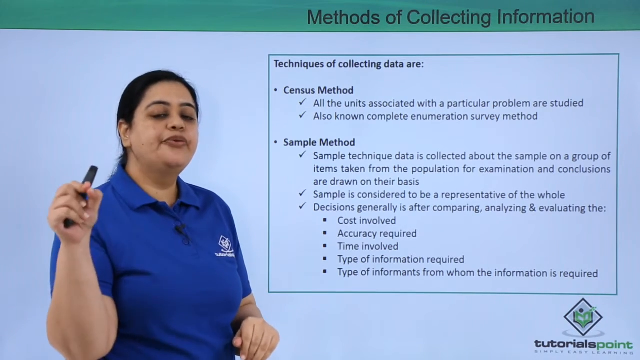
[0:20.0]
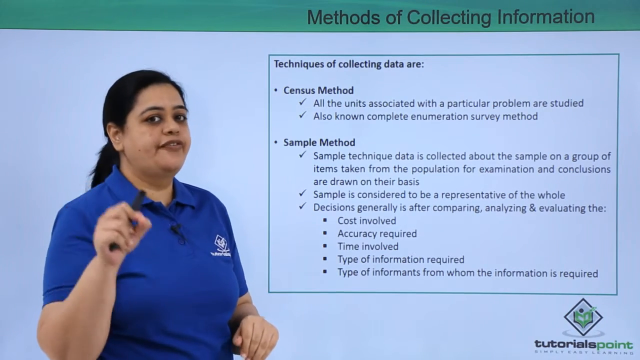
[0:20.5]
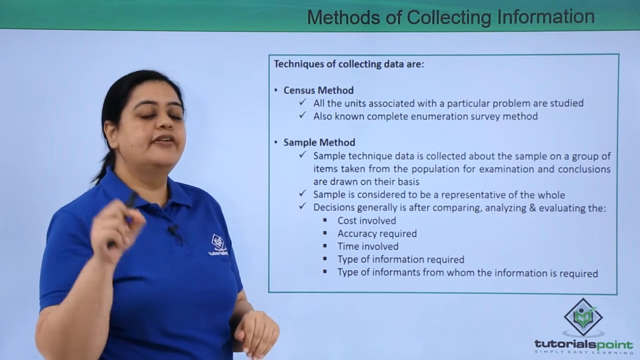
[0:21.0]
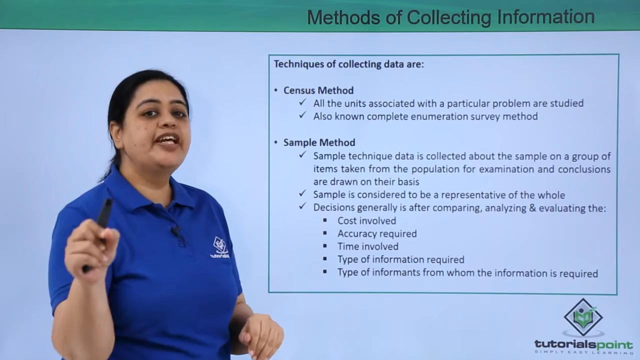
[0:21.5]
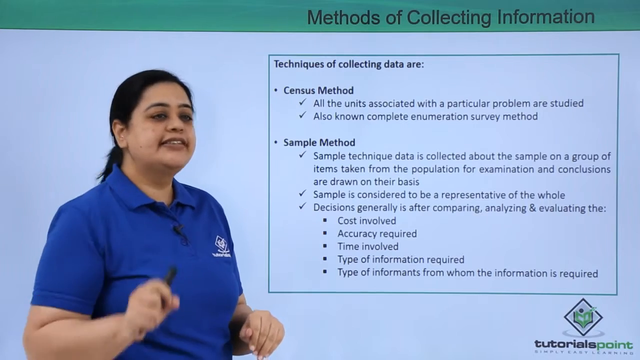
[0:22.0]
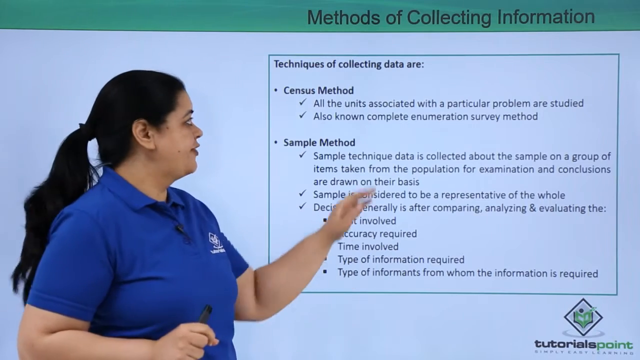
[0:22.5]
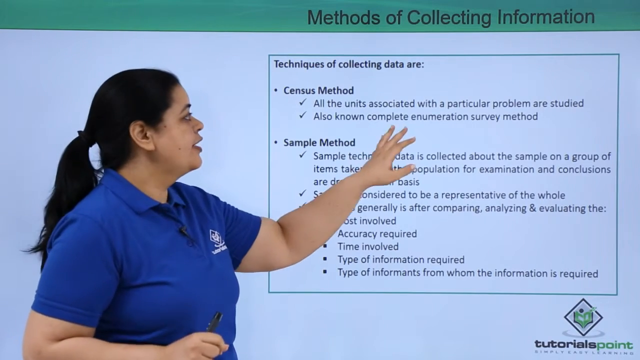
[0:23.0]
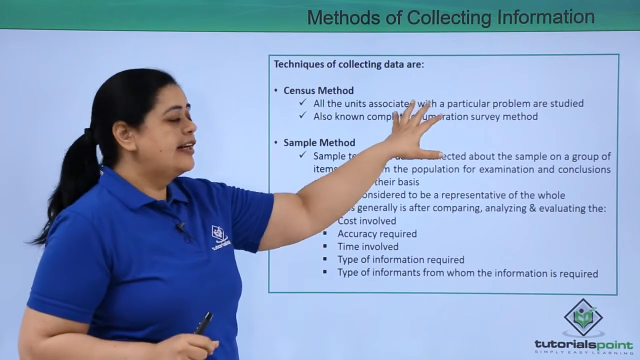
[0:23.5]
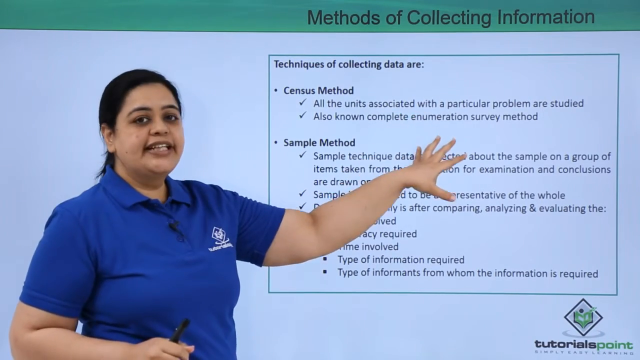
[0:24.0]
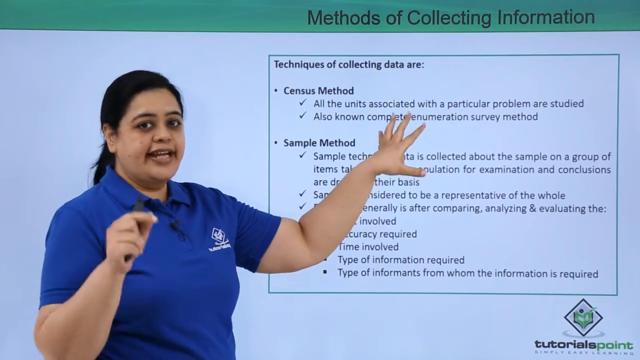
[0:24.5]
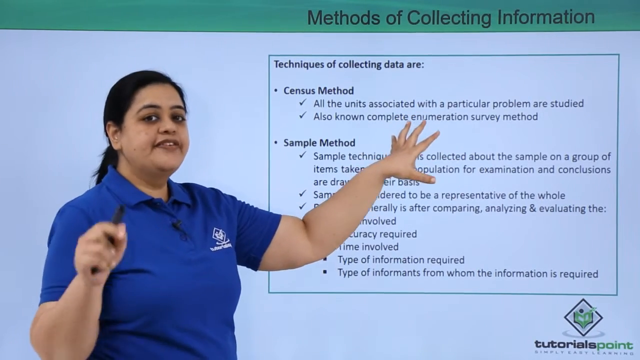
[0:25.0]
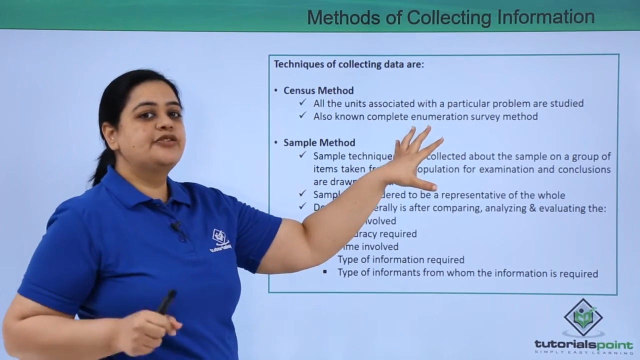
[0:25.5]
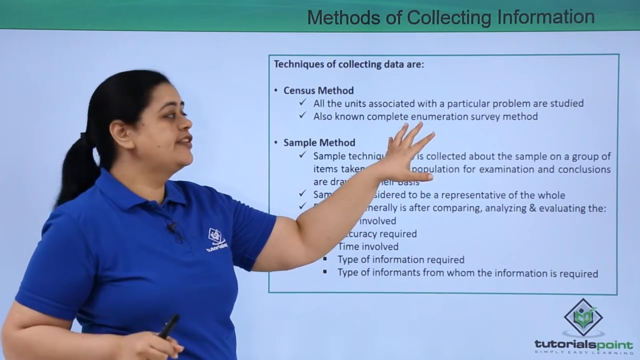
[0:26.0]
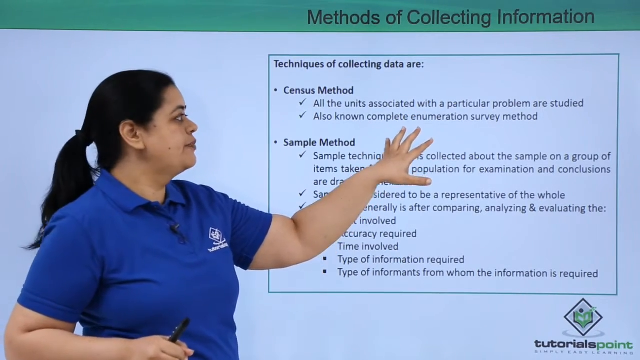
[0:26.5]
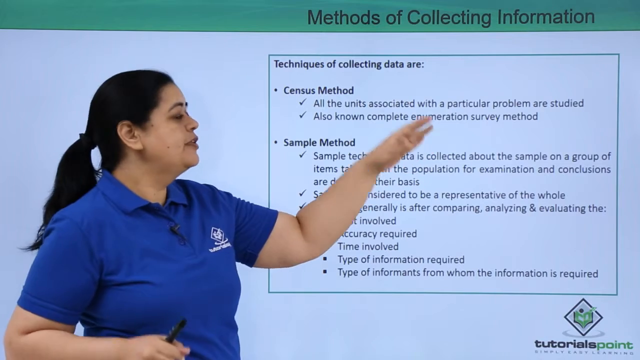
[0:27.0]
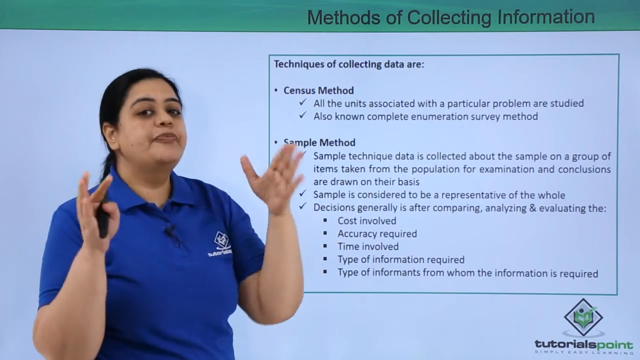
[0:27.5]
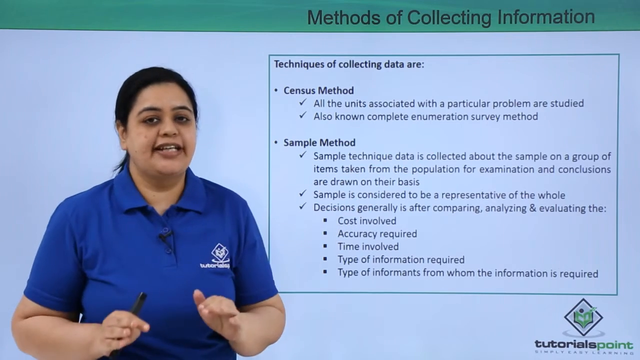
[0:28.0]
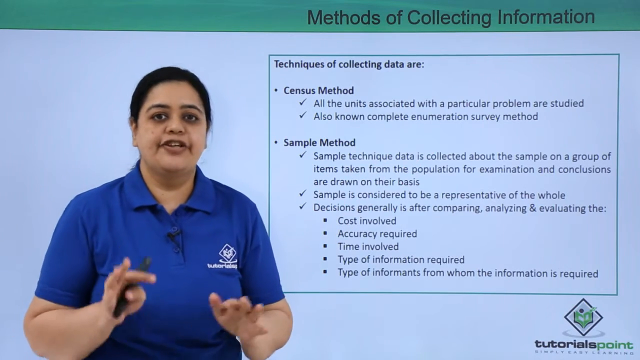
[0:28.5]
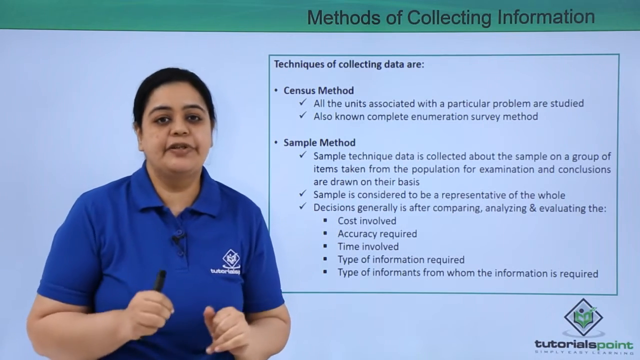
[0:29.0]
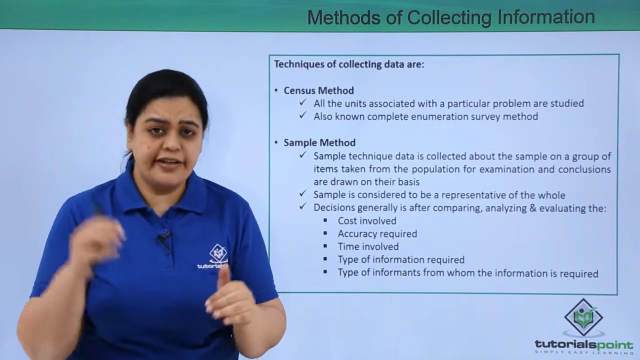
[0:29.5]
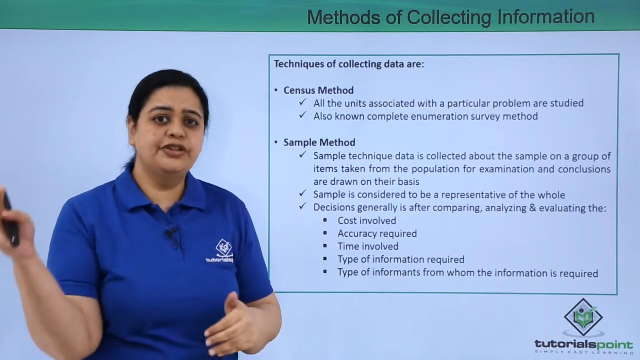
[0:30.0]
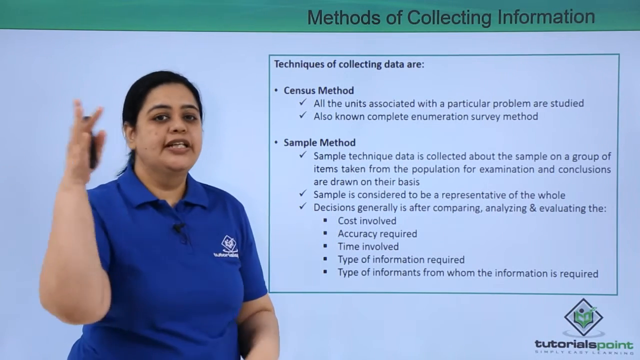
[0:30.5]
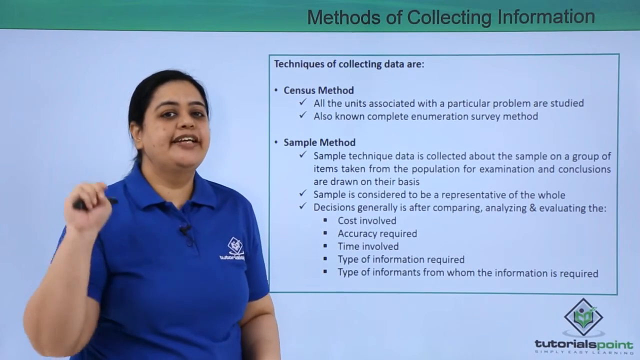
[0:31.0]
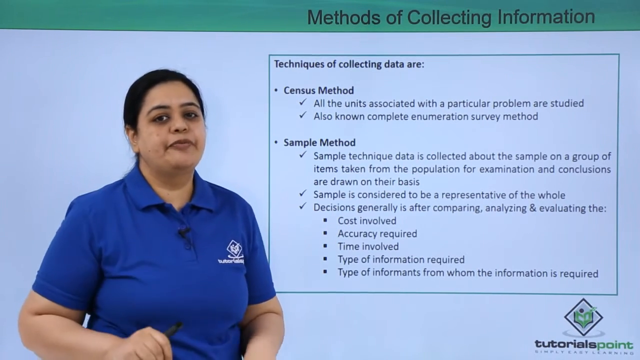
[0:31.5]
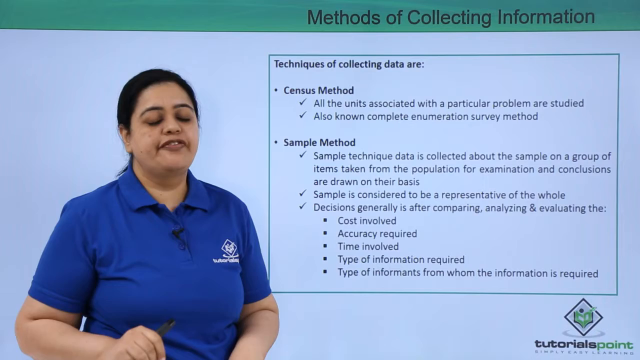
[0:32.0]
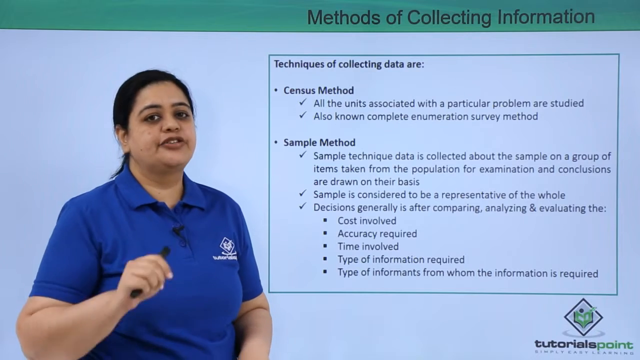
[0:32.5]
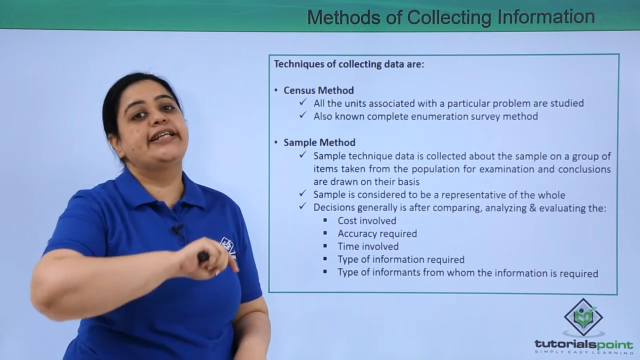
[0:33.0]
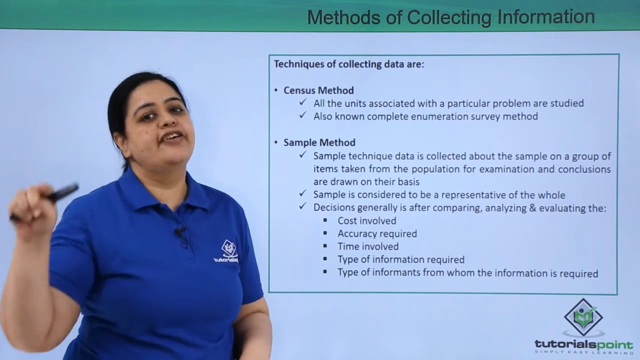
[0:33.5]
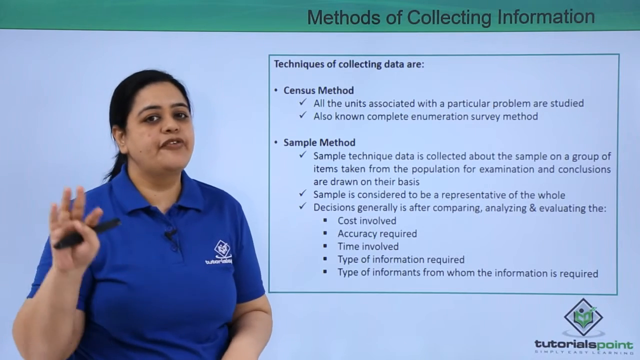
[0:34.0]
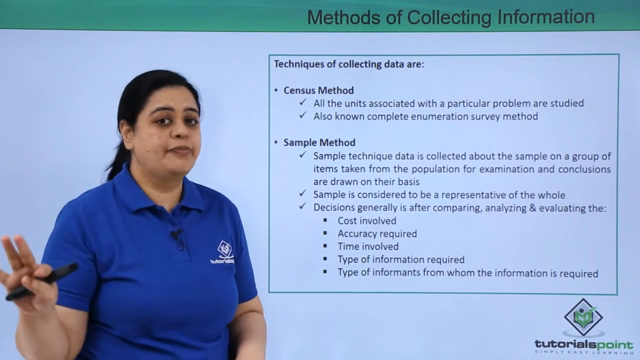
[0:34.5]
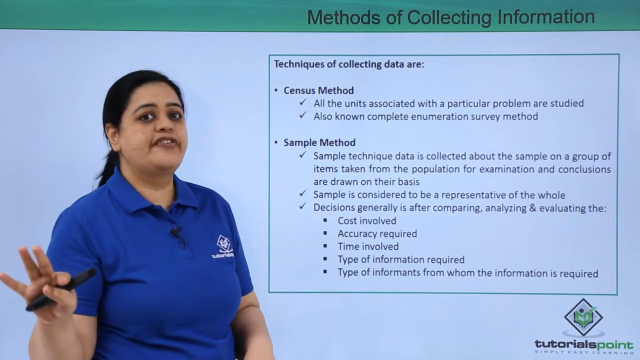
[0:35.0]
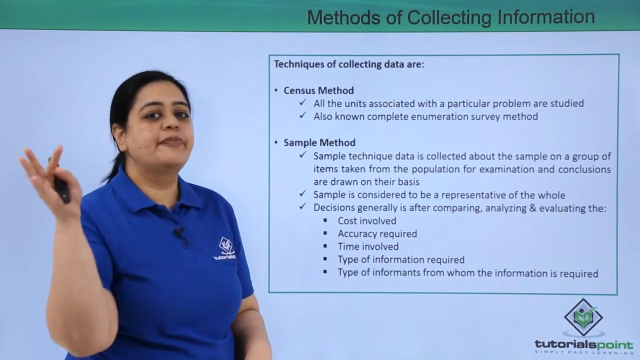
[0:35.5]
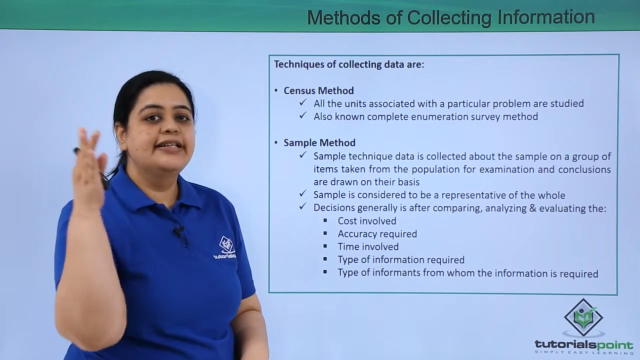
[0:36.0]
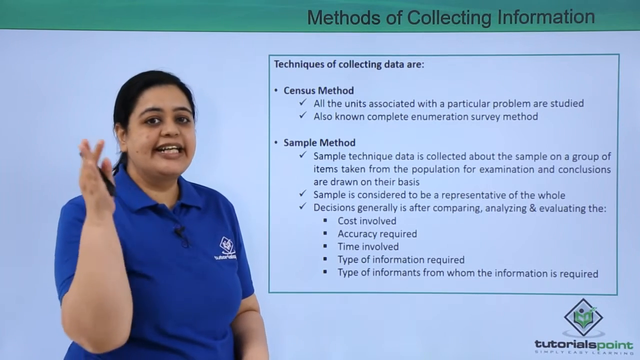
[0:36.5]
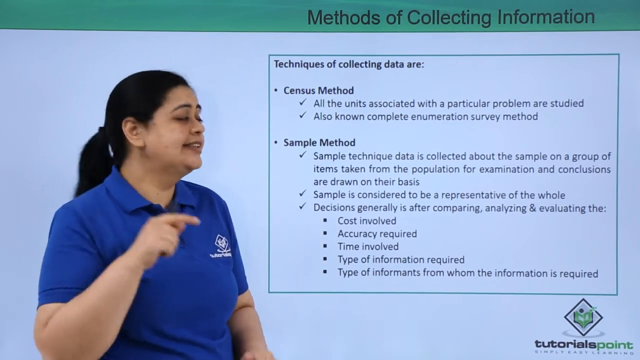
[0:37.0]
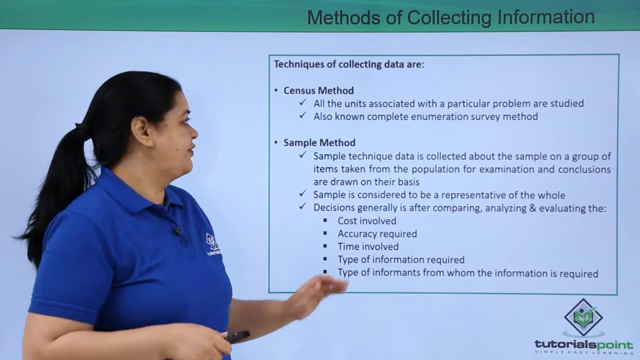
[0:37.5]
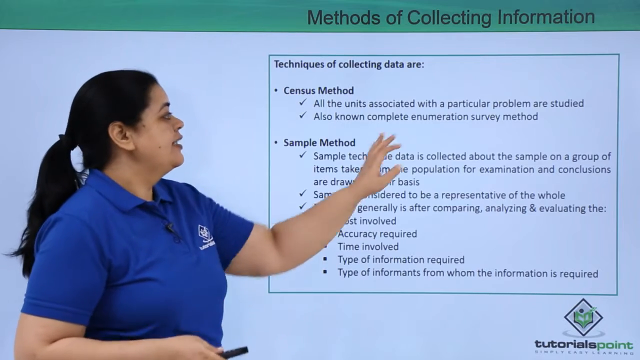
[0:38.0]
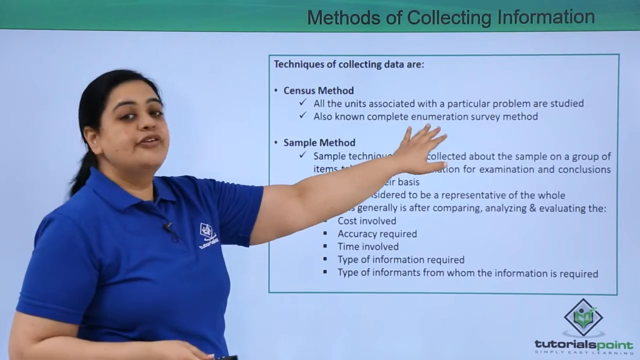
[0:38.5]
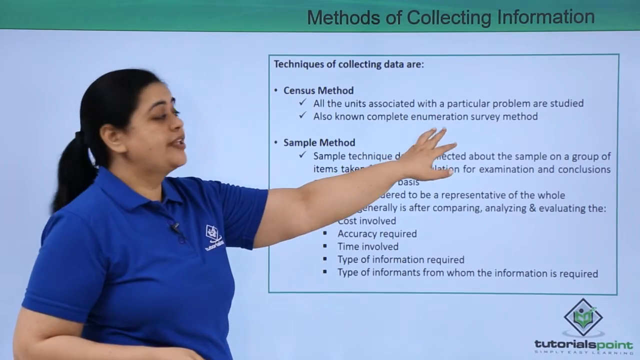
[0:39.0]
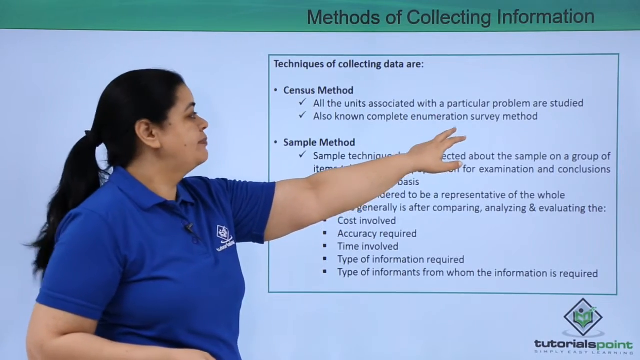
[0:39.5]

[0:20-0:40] The woman, apparently a lecturer or instructor, continues her lecture. She wears a blue uniform polo shirt, possibly a company shirt, and the shirt apparently says Tutorials Point, just like the background behind her. She speaks about the things already written on the presentation behind her. Her hair is pulled back in a low ponytail and is very long. She is a full-figured woman, which is visible when she raises her arm to gesture. She holds a black marker. She stands in front of what may be a PowerPoint lecture board, in a setting that might be a classroom. The video glitches into a mosaic look, turning her into little cube-like boxes, possibly at two points.